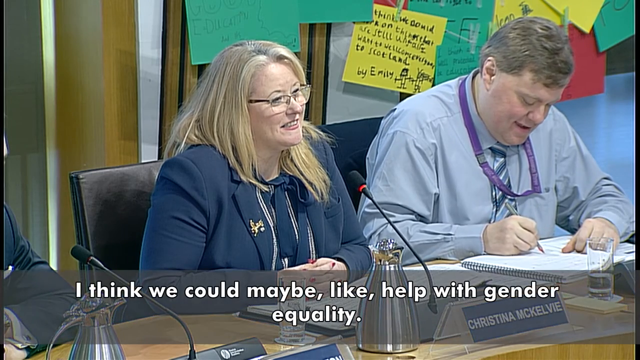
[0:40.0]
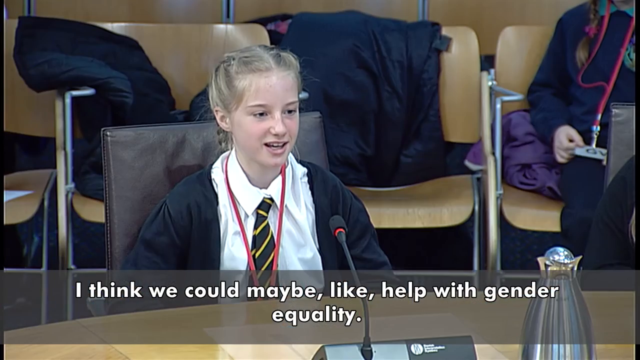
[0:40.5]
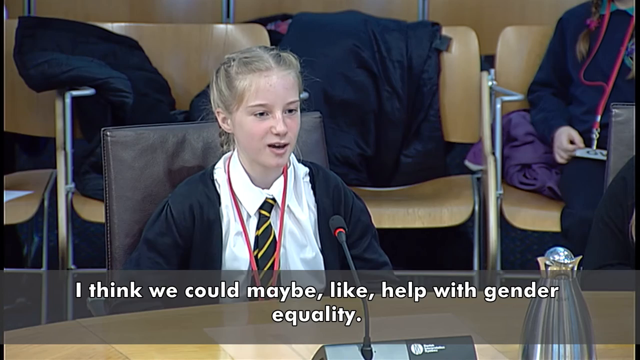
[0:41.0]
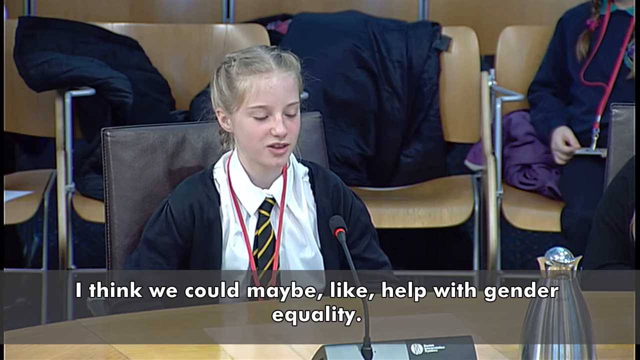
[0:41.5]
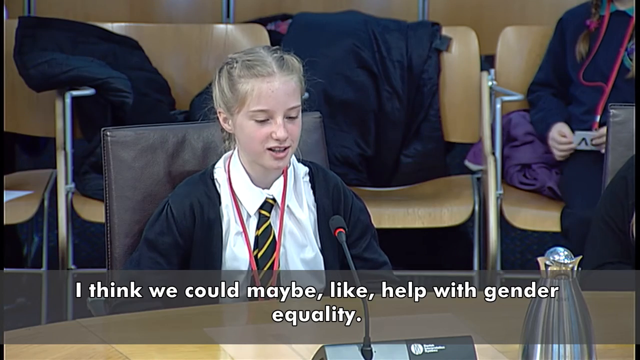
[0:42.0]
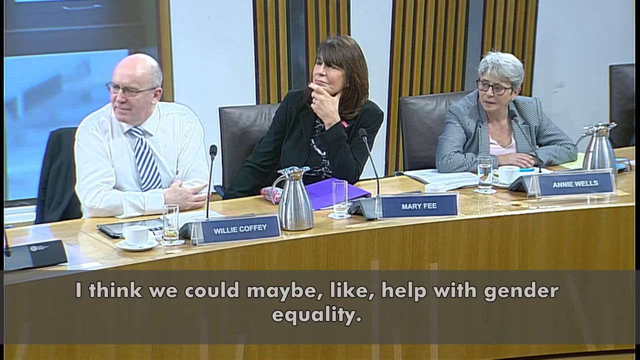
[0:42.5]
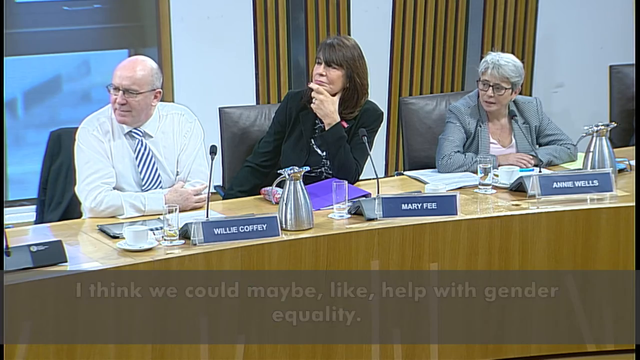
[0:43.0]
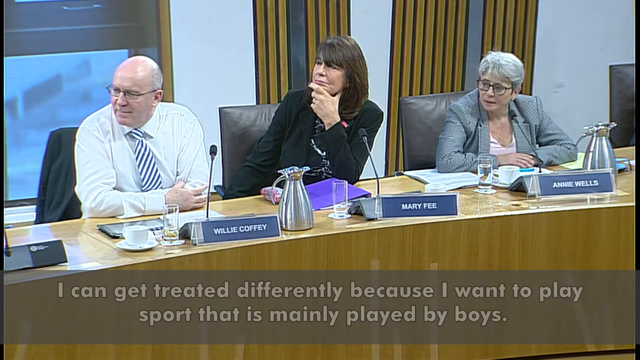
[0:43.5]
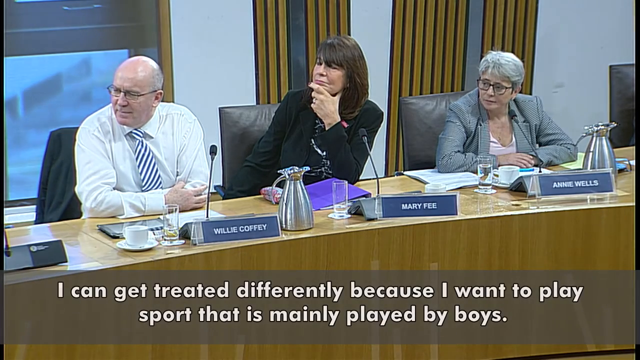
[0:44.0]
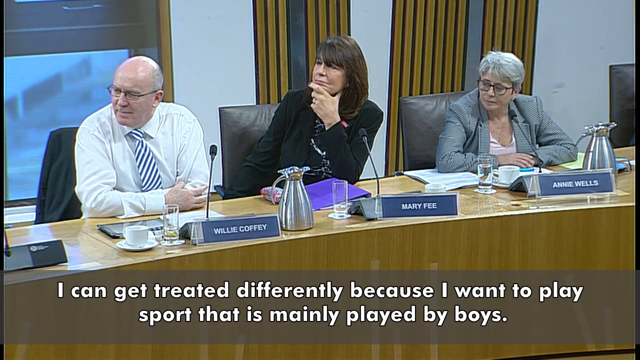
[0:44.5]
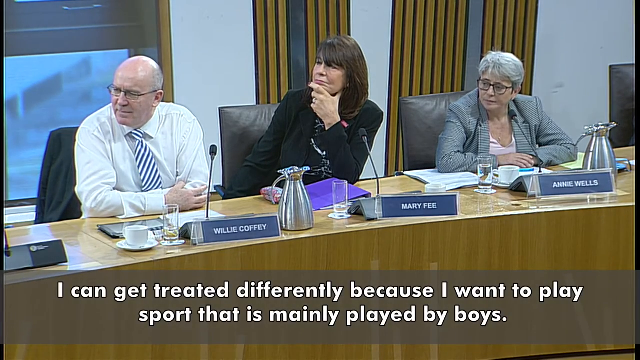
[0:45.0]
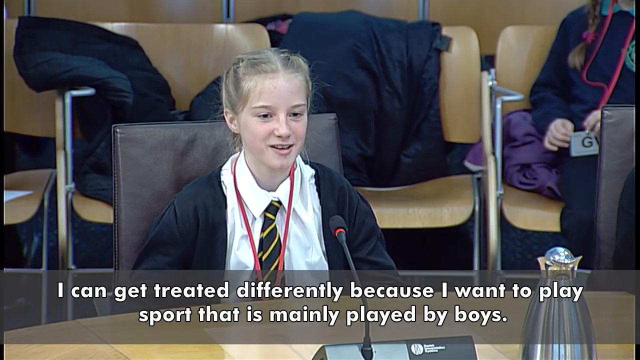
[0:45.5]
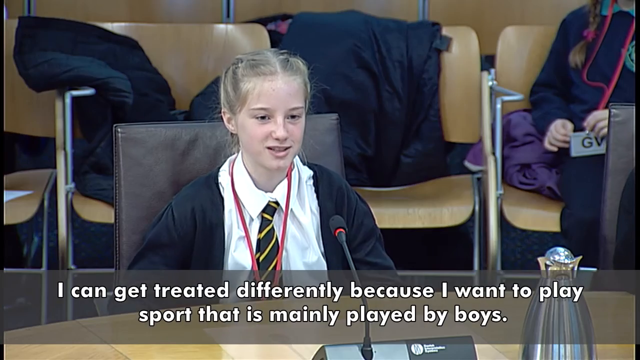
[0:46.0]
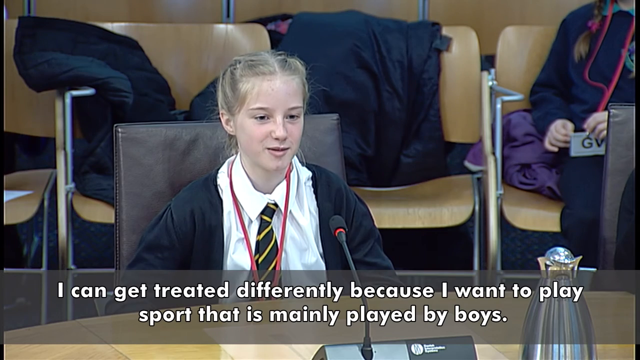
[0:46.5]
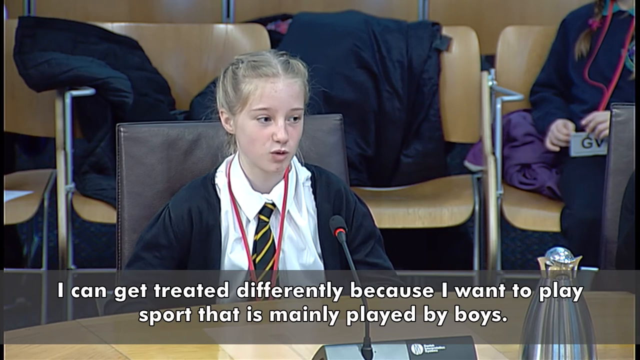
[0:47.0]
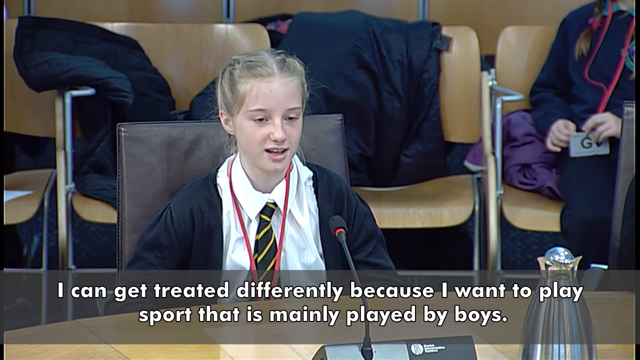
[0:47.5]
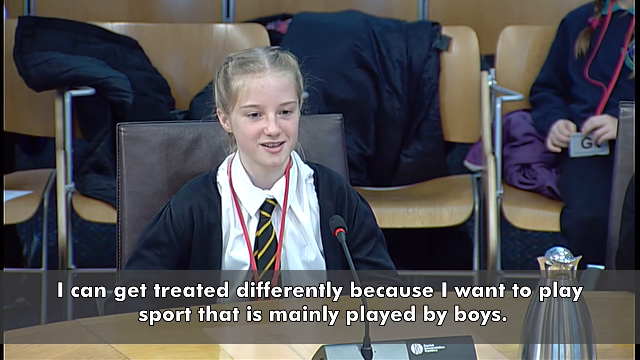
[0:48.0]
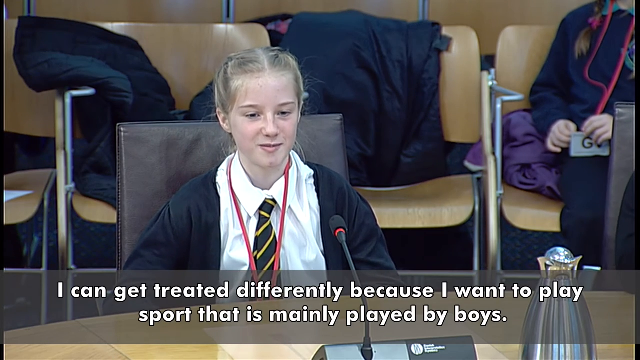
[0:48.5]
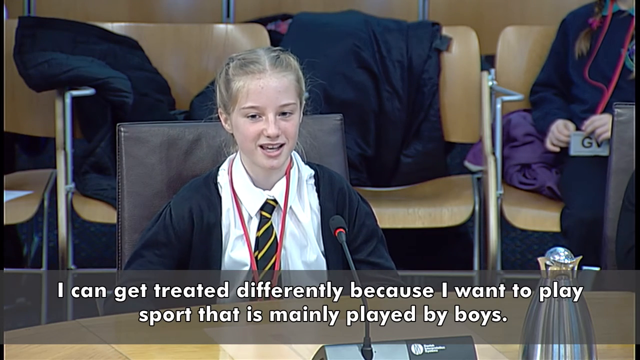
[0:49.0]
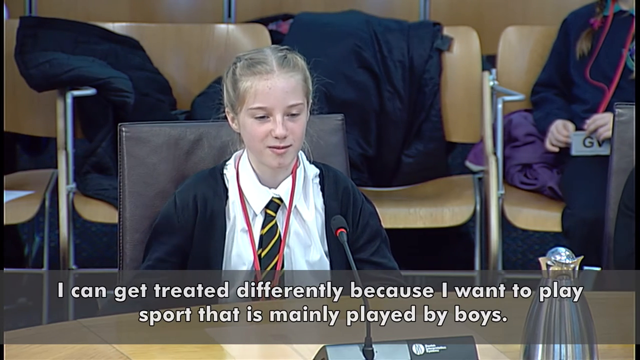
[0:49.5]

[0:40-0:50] A girl sits at the desk wearing a black coat, a white dress shirt, a black, yellow-striped tie and a red lanyard around her neck. Empty chairs are visible behind her. The same text from before is still at the bottom, then it shifts to "I can get treated differently because I want to play sport that is mainly played by boys." The girl appears to be saying this. There is a small black microphone sitting on the desk in front of her, and what appears to be a pitcher for serving liquids on the right side.